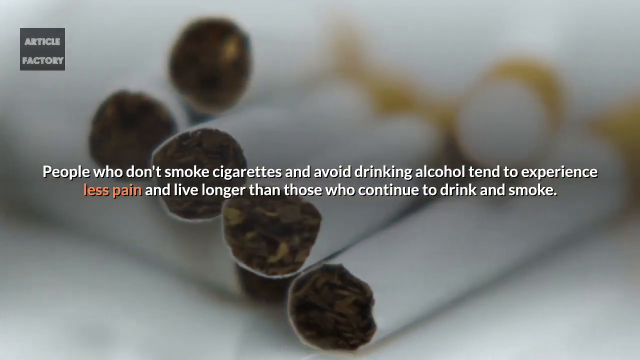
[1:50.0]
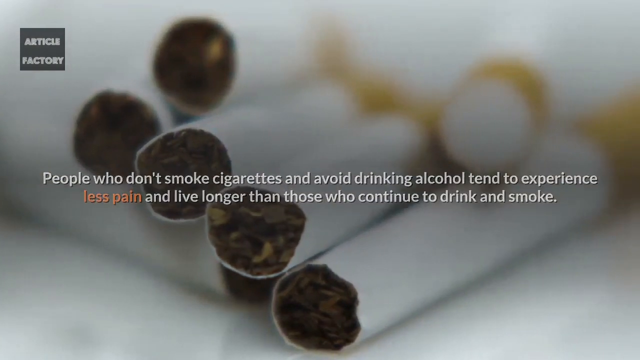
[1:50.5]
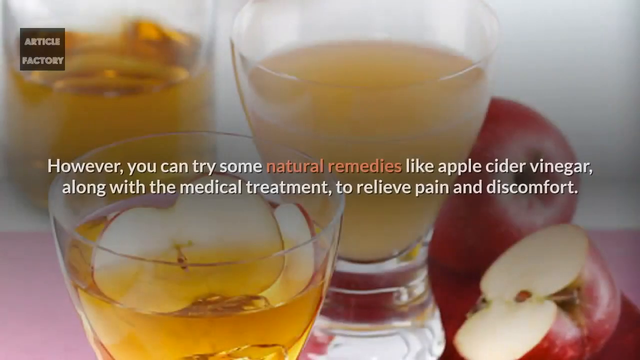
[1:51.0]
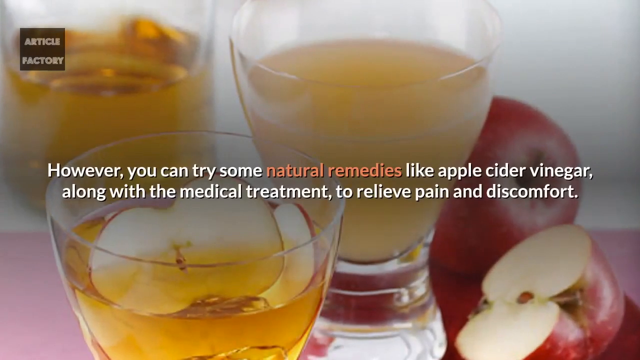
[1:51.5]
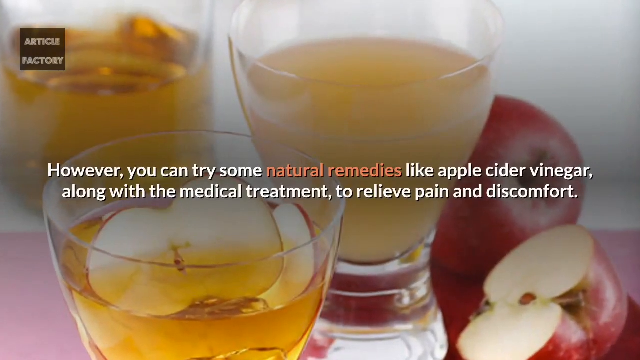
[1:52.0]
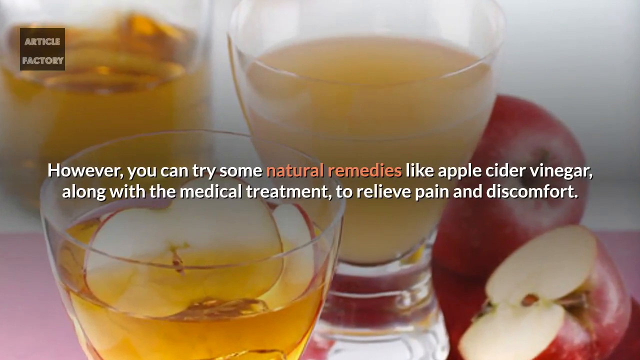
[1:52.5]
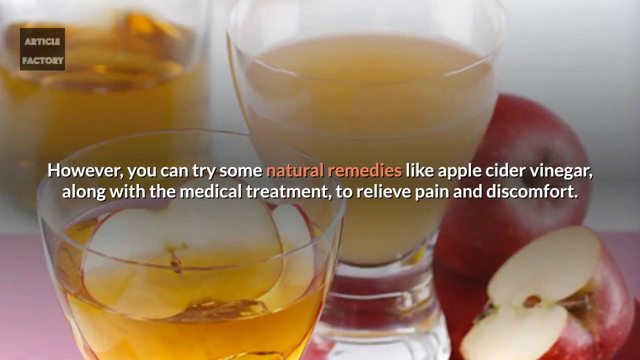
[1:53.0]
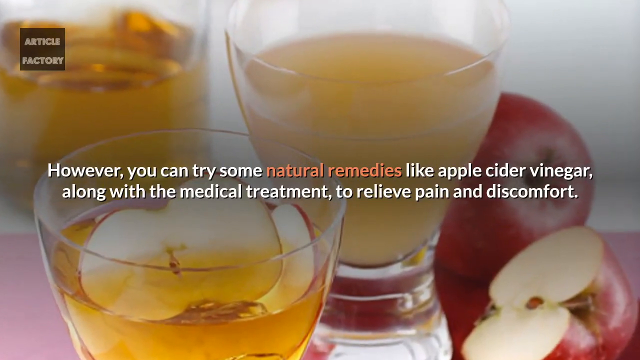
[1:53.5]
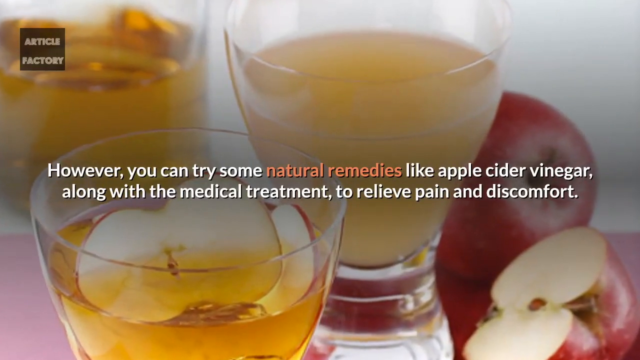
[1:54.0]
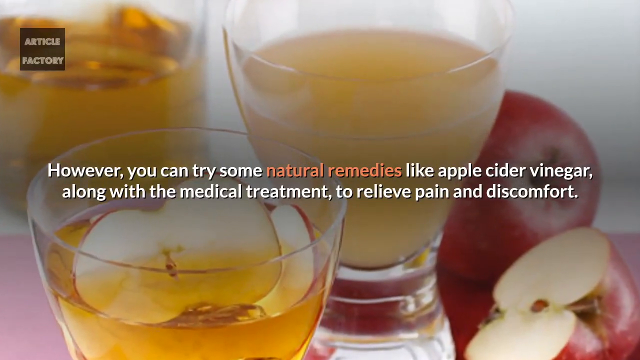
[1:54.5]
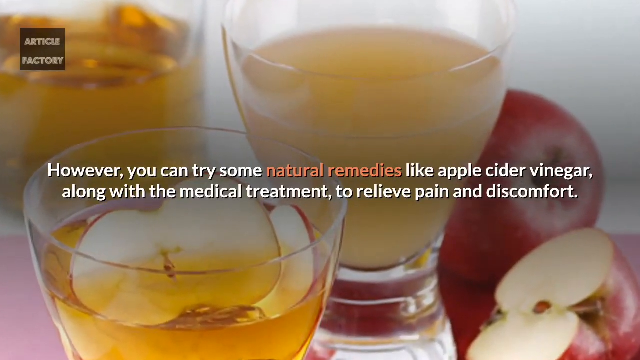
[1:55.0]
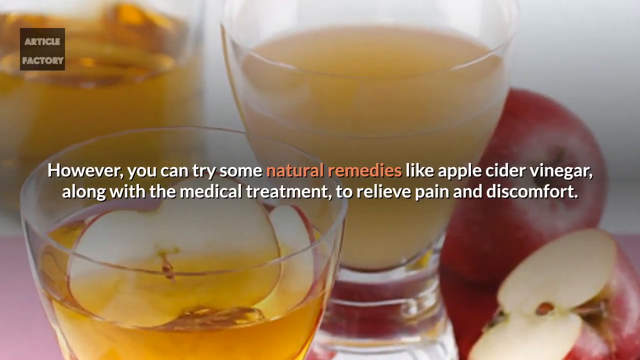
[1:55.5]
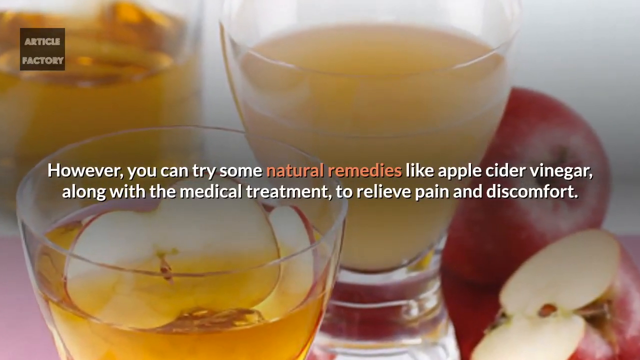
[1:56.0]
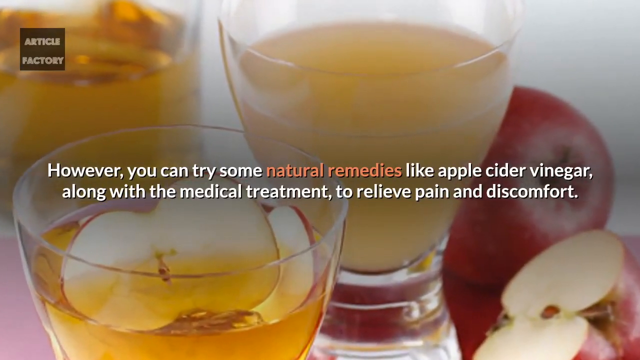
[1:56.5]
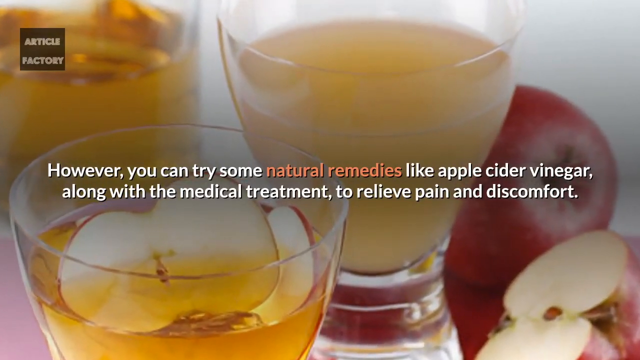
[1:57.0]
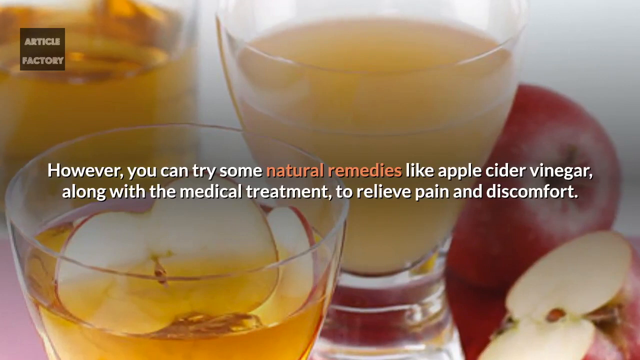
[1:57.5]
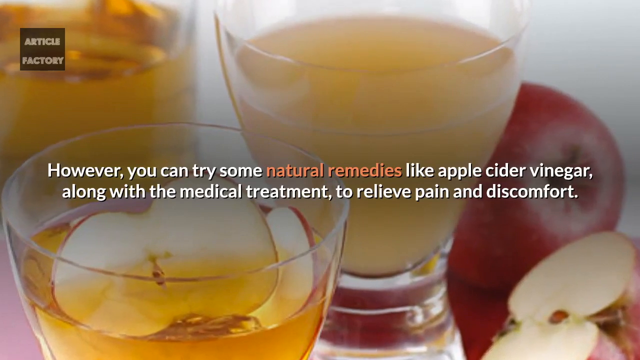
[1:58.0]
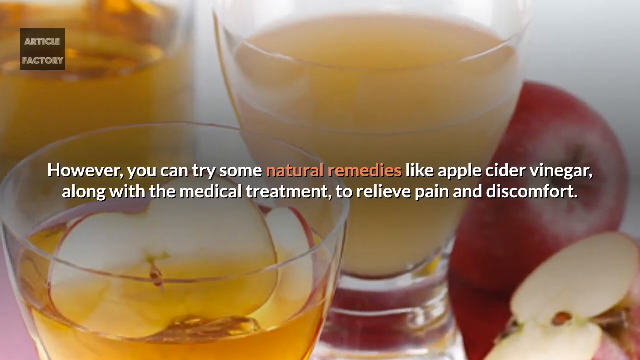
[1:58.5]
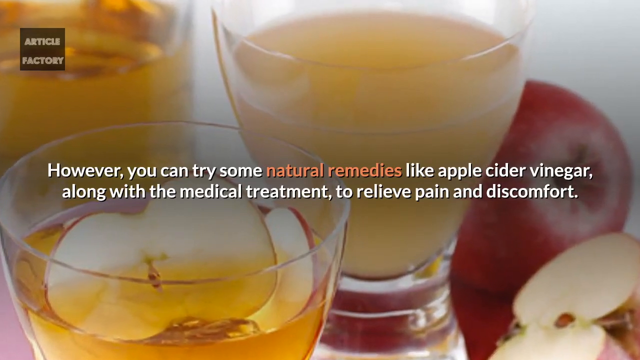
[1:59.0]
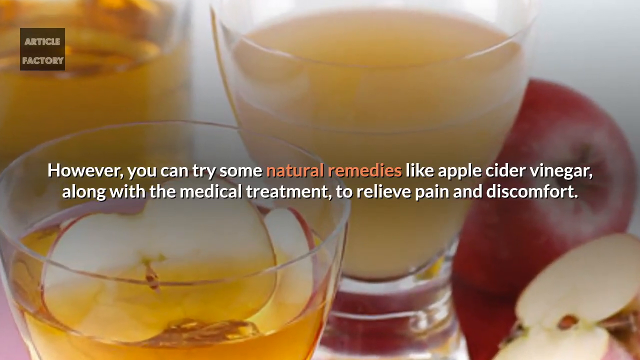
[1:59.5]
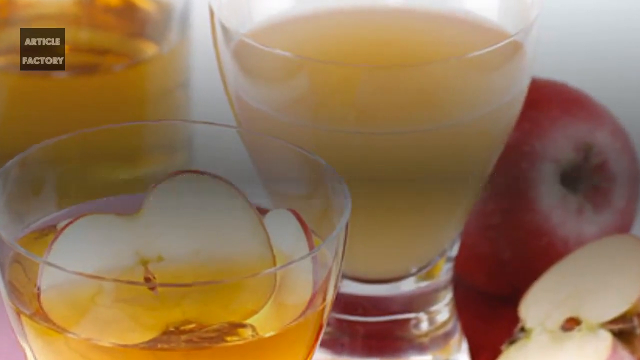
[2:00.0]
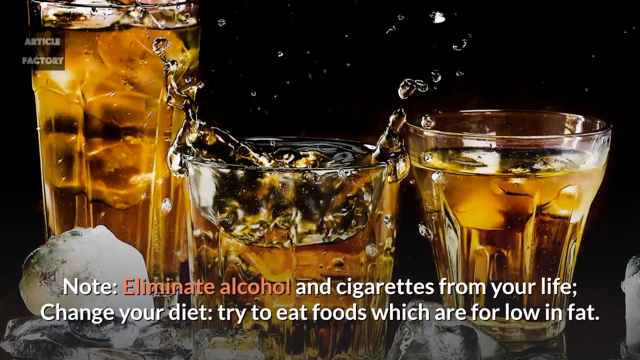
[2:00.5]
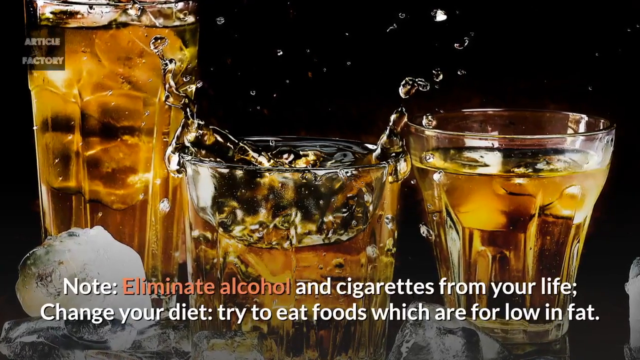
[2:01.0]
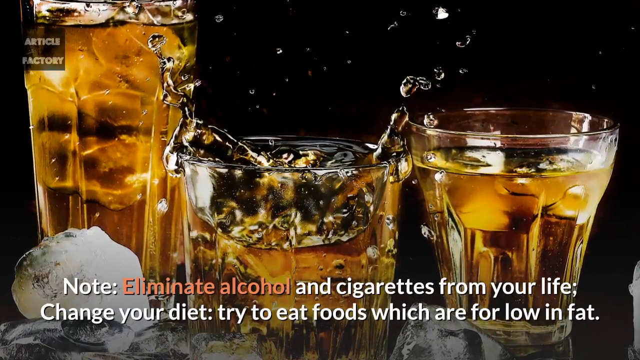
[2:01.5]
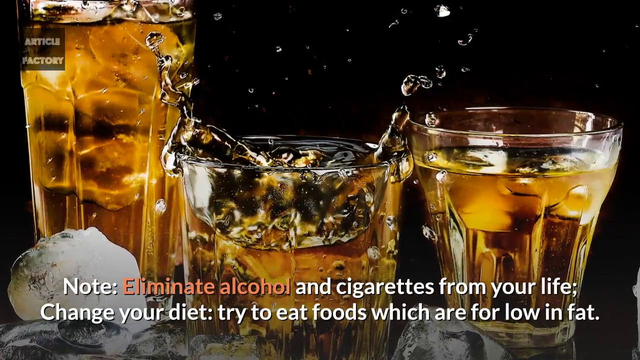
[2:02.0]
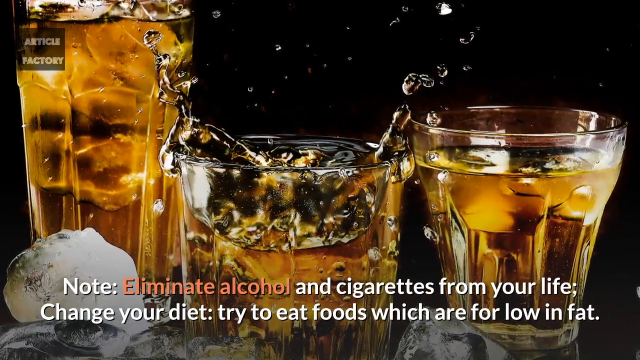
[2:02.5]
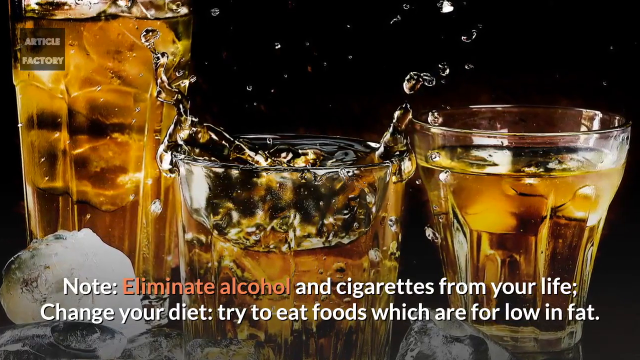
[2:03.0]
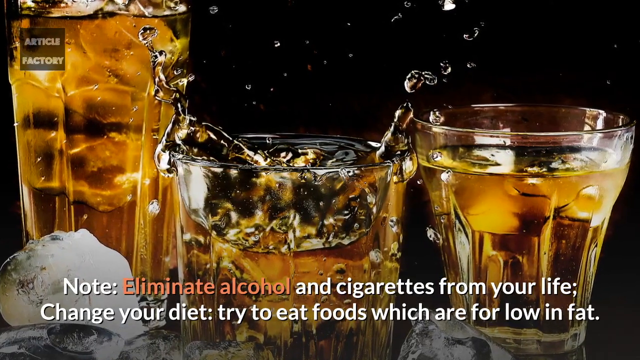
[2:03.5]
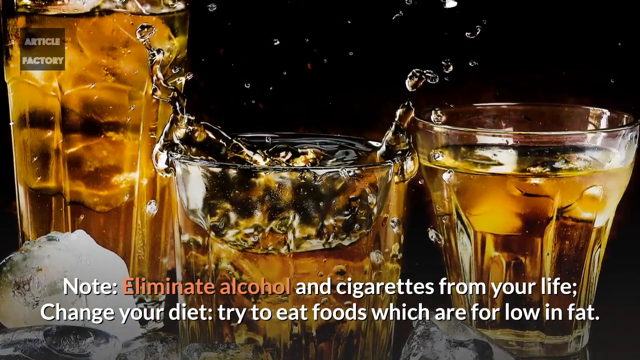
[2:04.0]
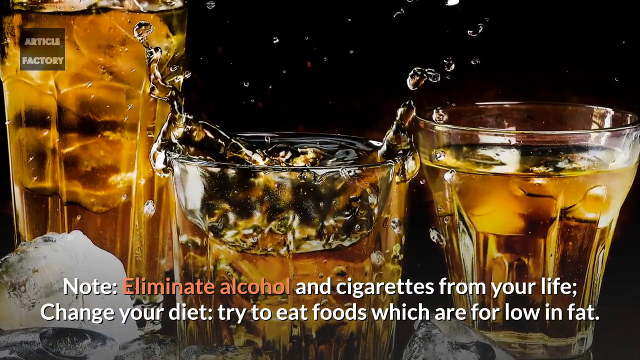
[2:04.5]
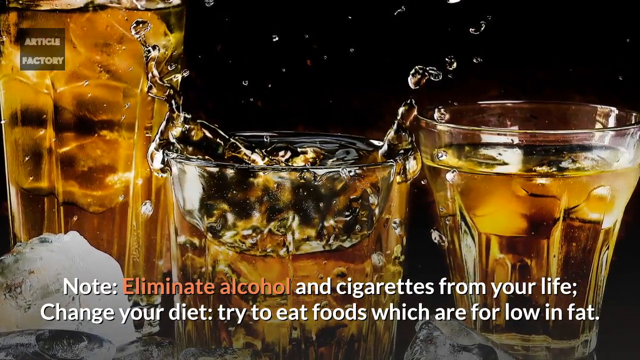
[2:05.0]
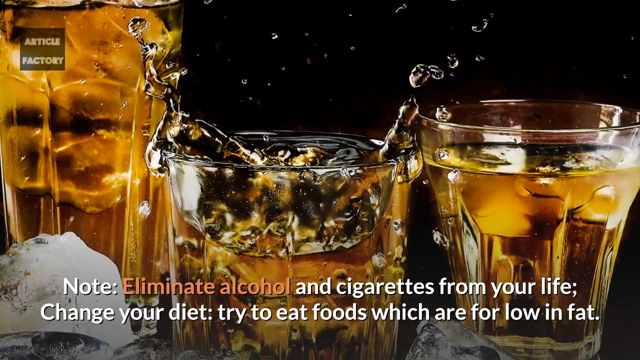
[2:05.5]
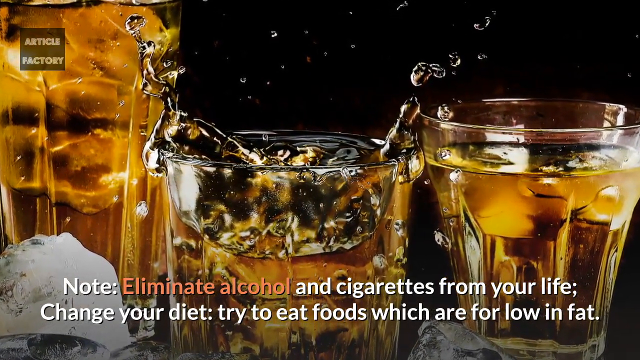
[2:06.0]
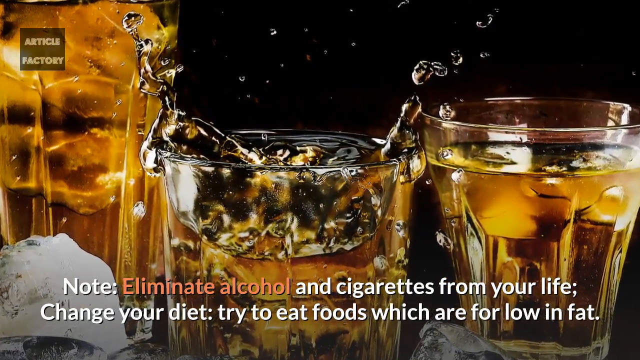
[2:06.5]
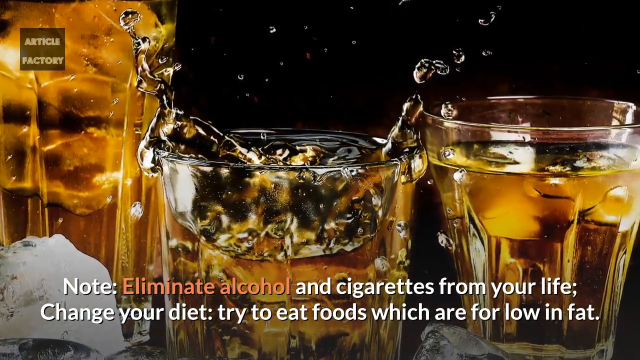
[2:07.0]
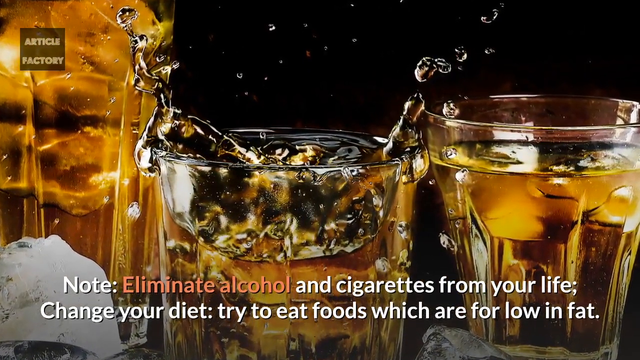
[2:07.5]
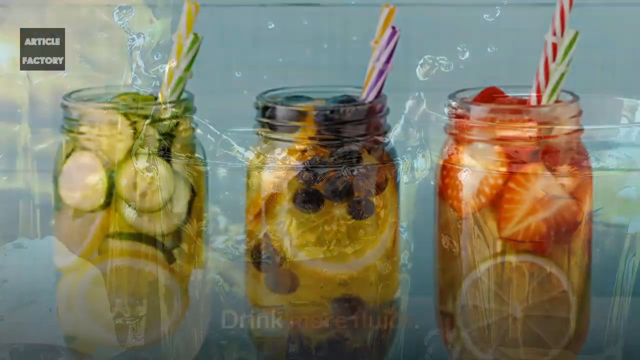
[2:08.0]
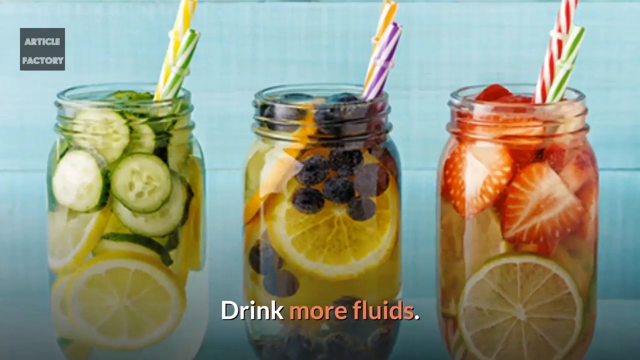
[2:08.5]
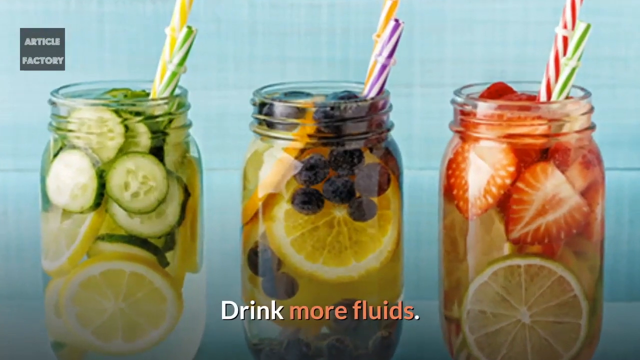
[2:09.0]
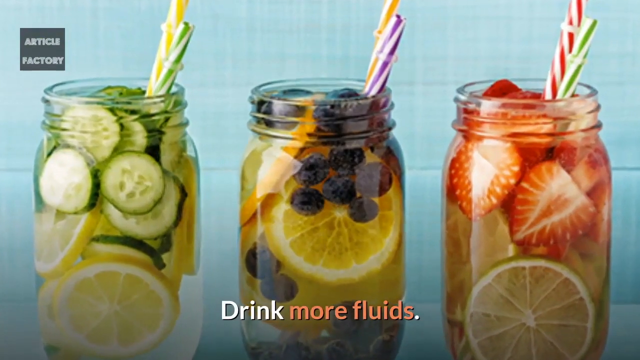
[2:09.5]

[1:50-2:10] A bunch of cigarettes fills the screen with the text "people who don't smoke cigarettes and avoid drinking alcohol tend to experience less pain and live longer than those who continue to drink and smoke." Next comes a bunch of apples and what looks like maybe apple cider vinegar, with the text "however you can try some natural remedies like apple cider vinegar along with the medical treatment to relieve pain and discomfort"; three glasses of apple cider vinegar are in this slide. Then some beer appears, apparently in glasses, or some type of liquor, with the text "note eliminate alcohol and cigarettes from your life. Change your diet. Try to eat foods which are low in fat." Three jars of liquids follow with the text "drink more fluids"; they contain lemon, blueberry, strawberries and cucumbers, with two straws in each.